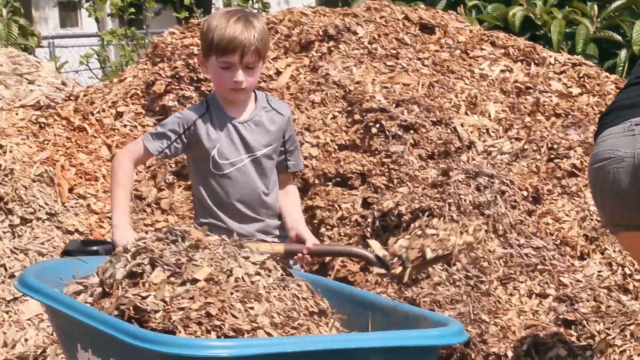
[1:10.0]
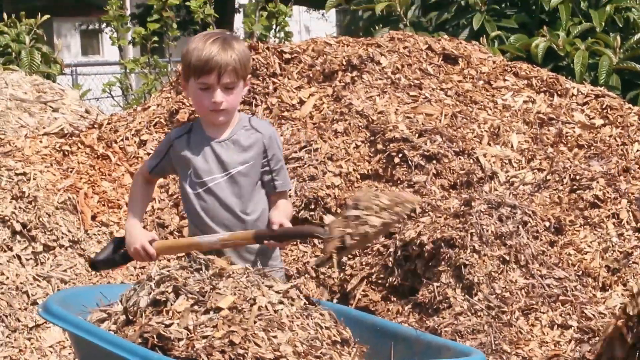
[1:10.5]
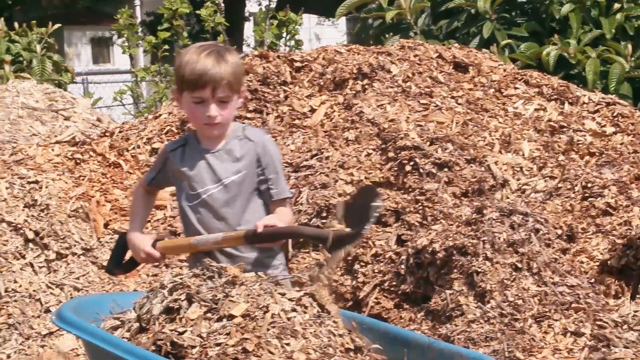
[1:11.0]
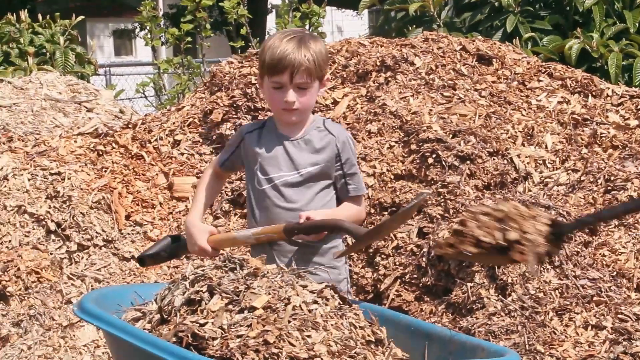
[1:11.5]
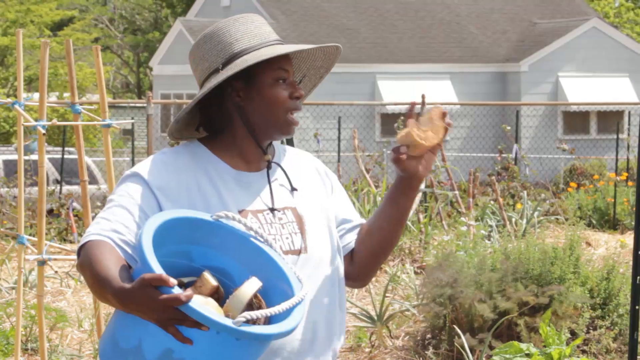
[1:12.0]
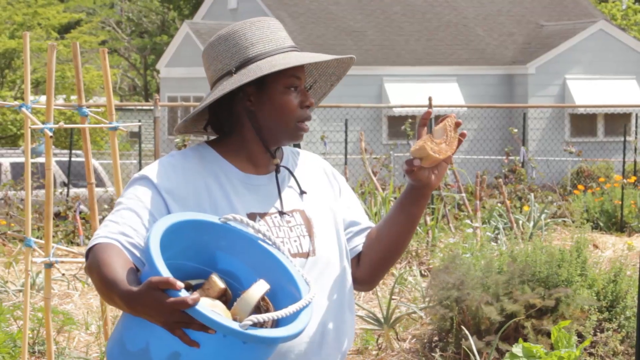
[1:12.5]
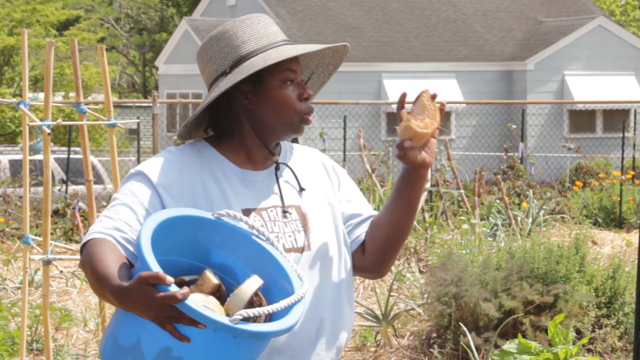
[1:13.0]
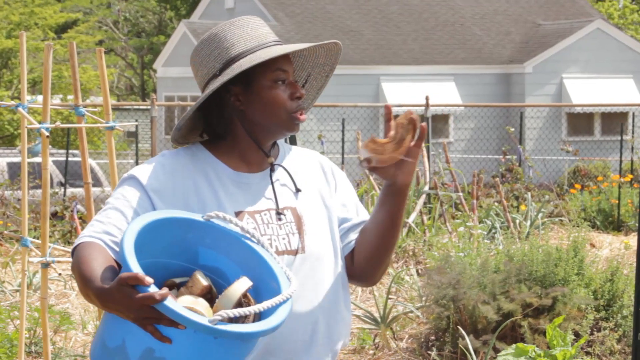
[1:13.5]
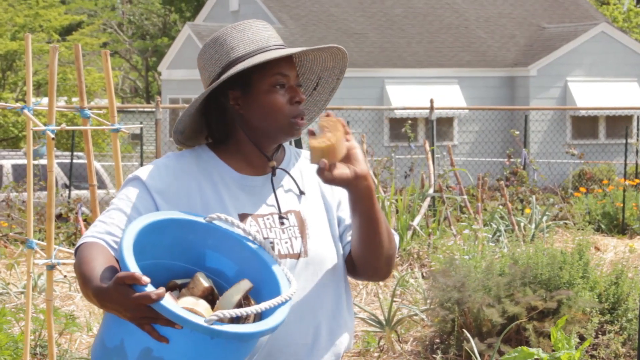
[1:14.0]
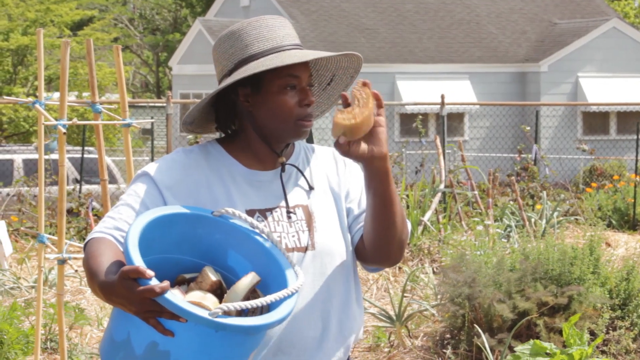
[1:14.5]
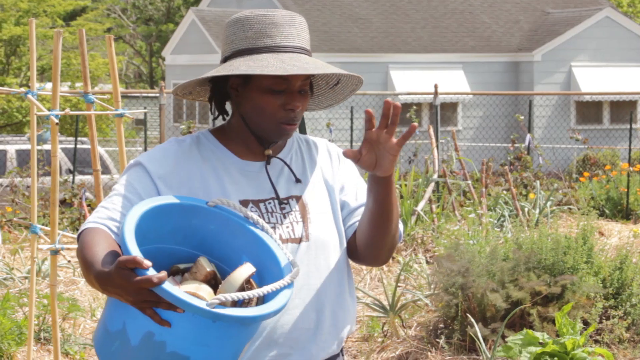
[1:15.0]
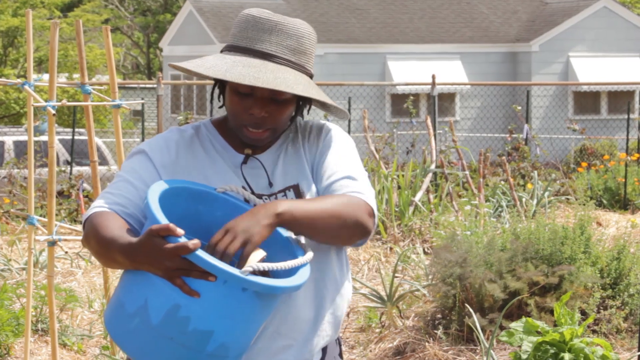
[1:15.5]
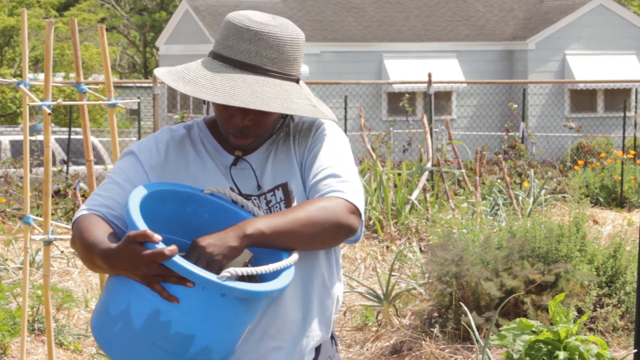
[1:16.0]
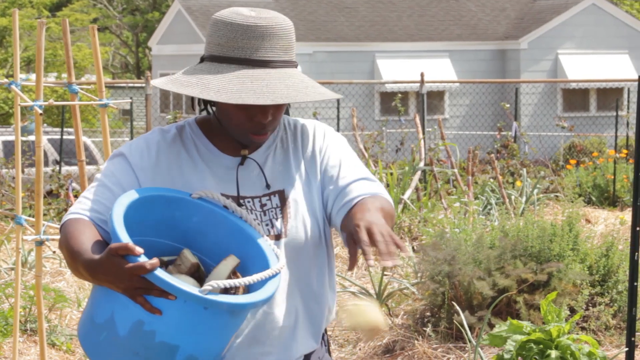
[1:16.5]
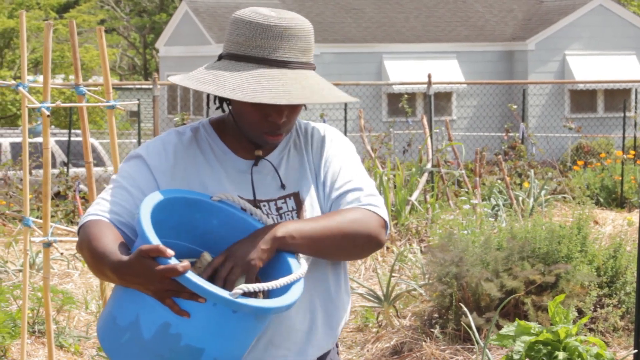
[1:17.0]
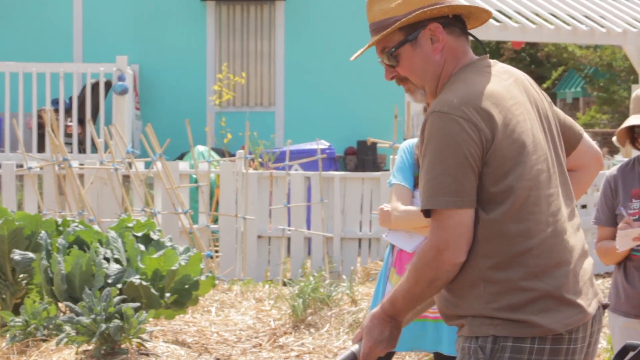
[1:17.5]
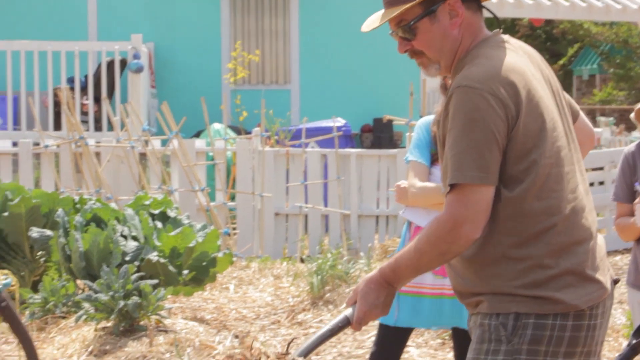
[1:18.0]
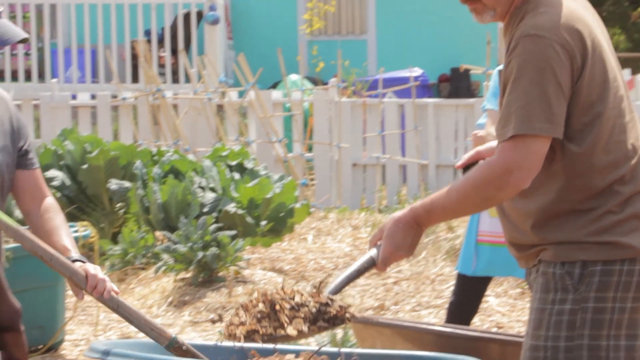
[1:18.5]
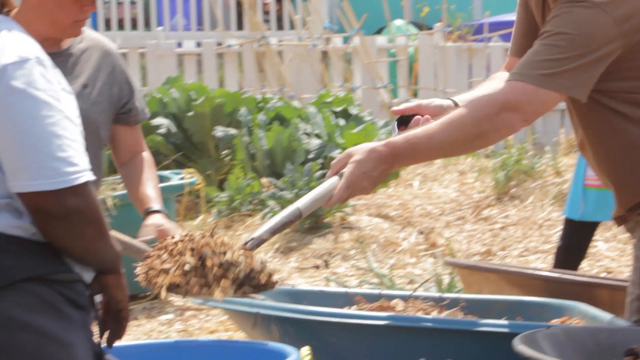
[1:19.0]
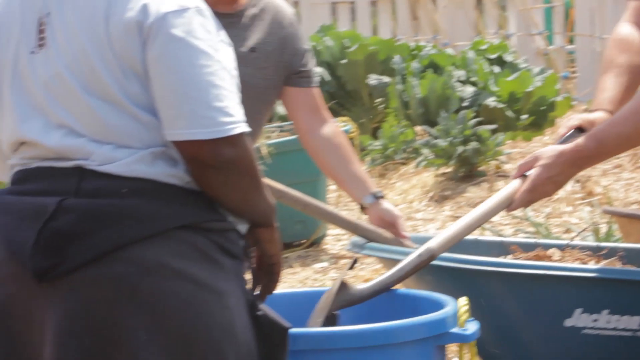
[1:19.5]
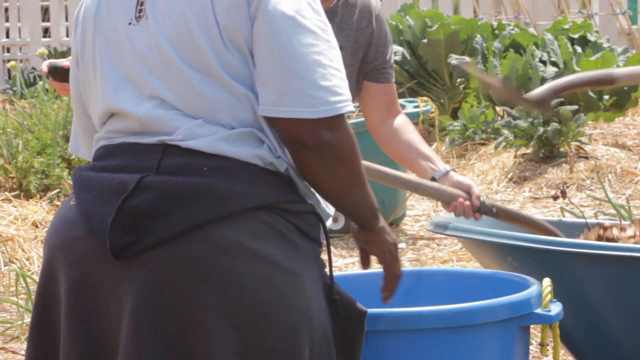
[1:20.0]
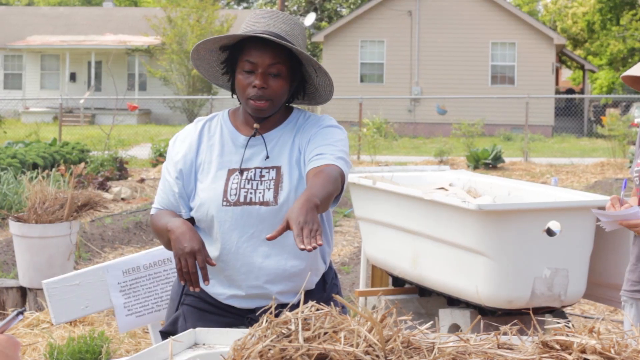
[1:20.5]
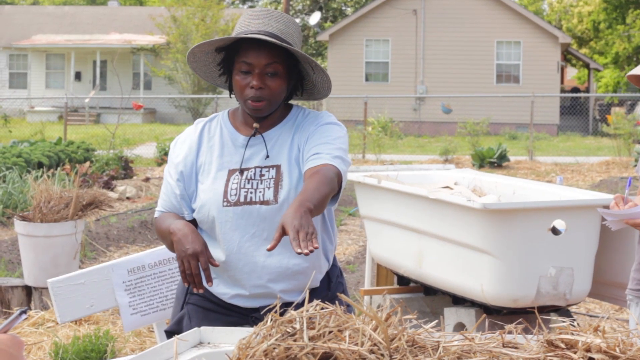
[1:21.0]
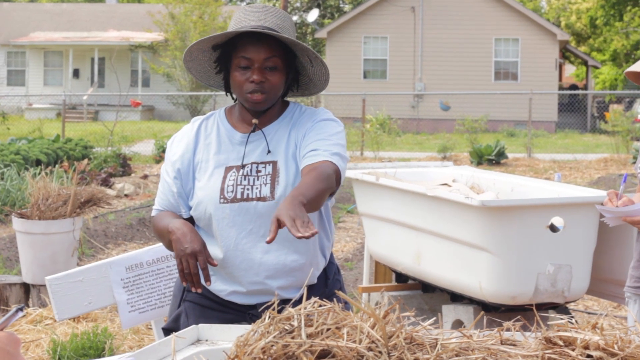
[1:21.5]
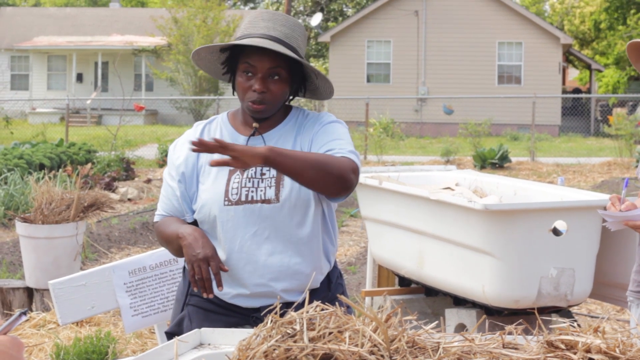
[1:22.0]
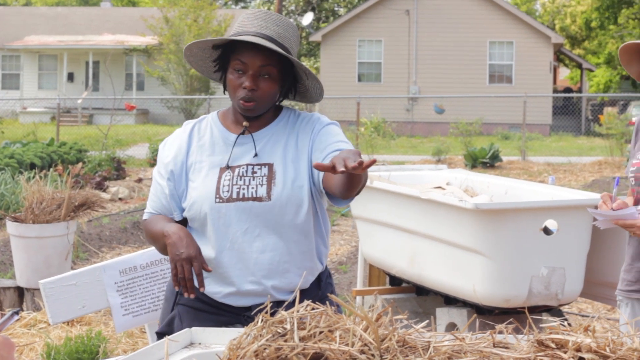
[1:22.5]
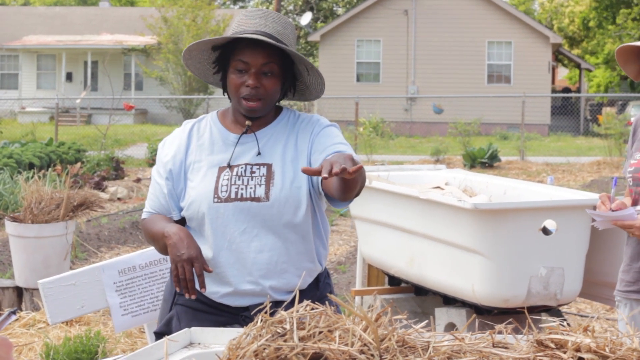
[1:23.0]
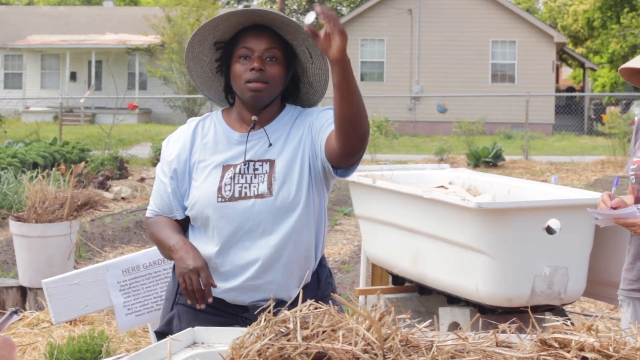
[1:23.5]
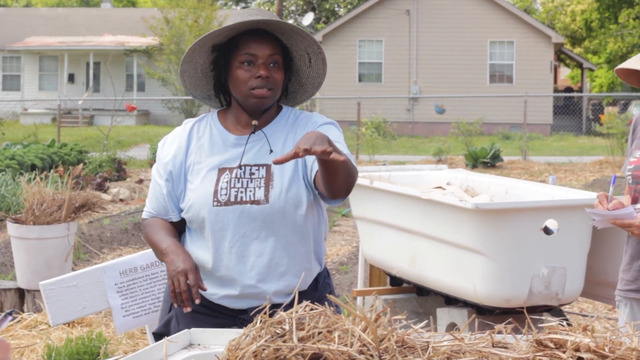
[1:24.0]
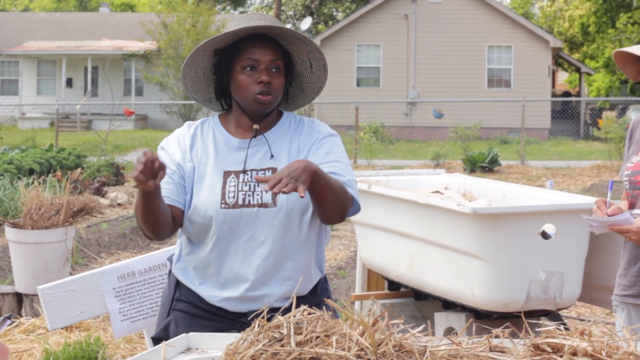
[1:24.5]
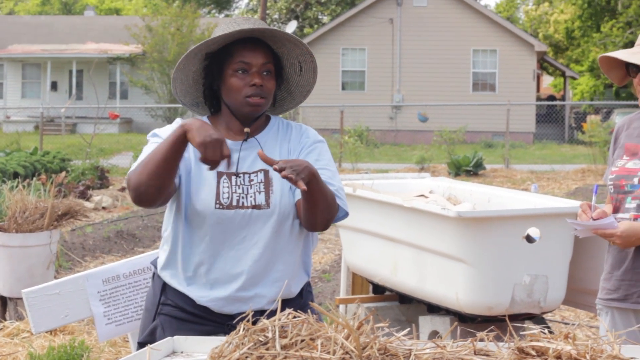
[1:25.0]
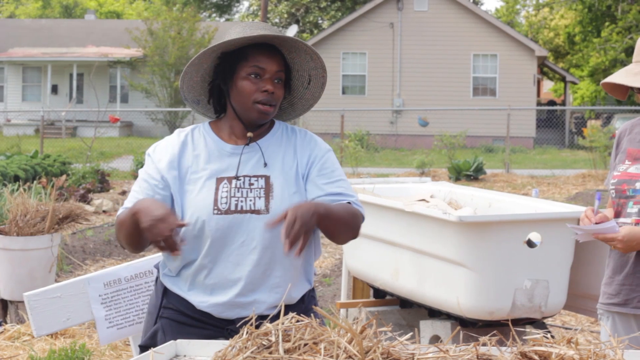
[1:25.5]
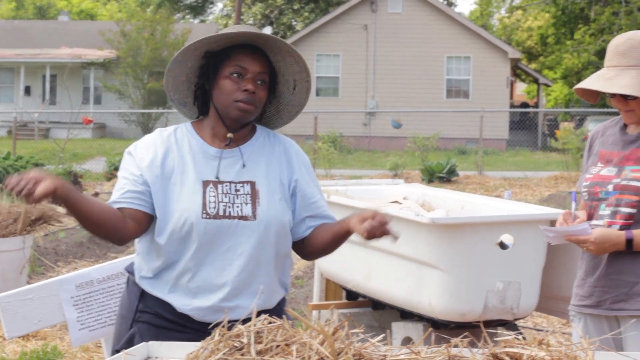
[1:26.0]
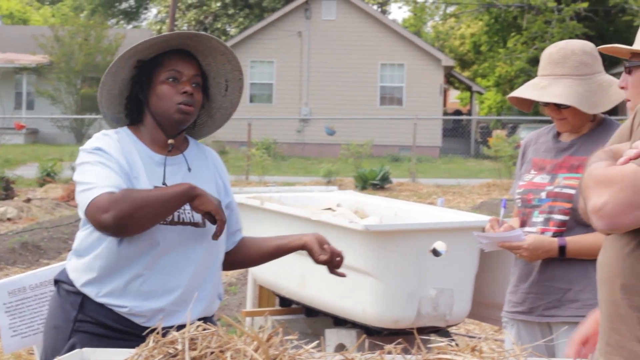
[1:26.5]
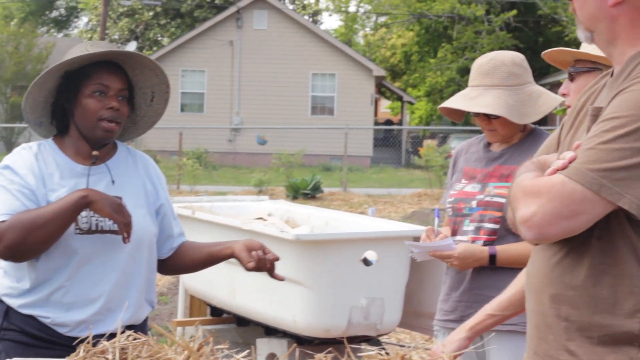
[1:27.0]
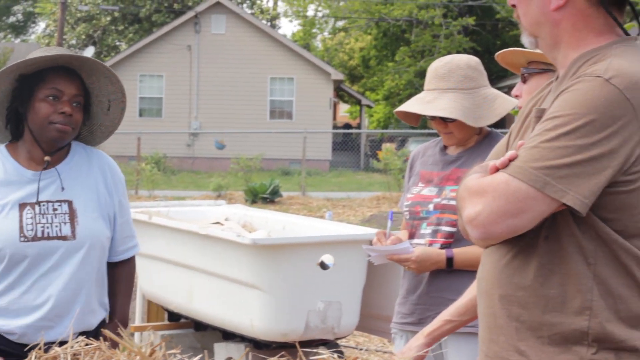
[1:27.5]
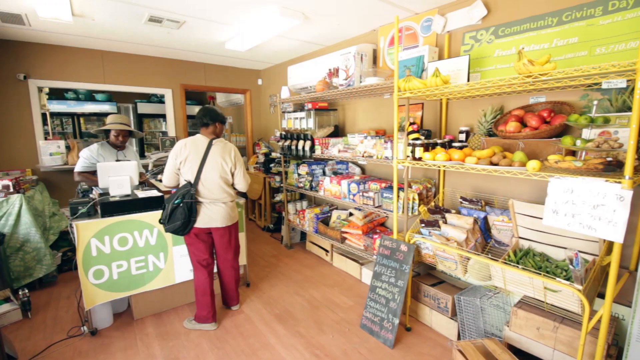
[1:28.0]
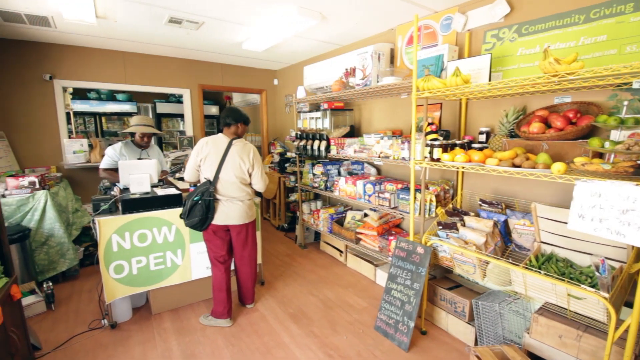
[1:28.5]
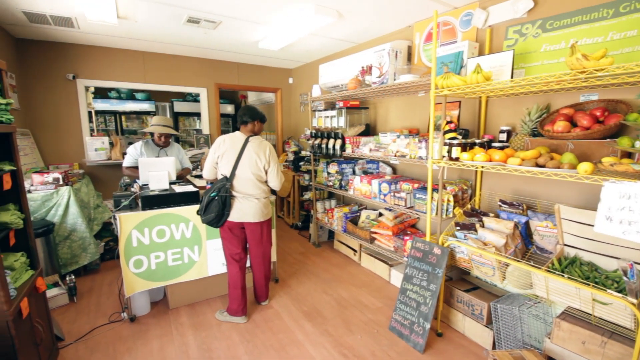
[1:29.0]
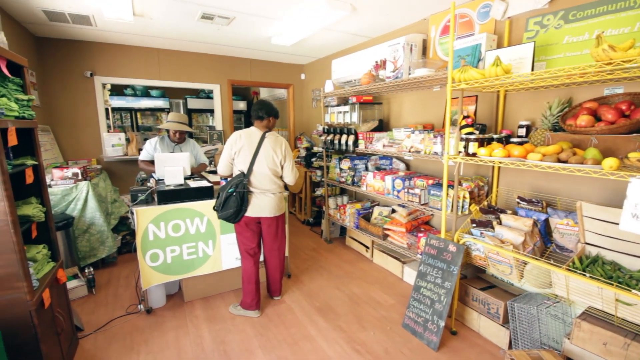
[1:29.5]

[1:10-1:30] A young Caucasian male shovels mulch into a blue wheelbarrow. The main woman is shown helping the people and talking, and text appears on the screen about the farm now being open. The video transitions between a few different shots: people shoveling mulch, the woman putting something, apparently wooden pieces, on the ground from a blue bucket, multiple individuals shoveling mulch, and some hay in a bin with the woman explaining something about it. The scene then transitions to the store associated with the farm.